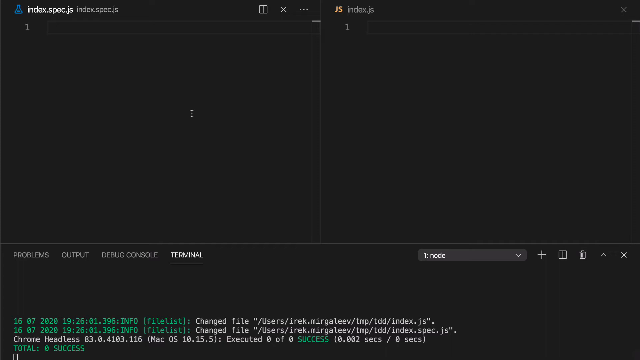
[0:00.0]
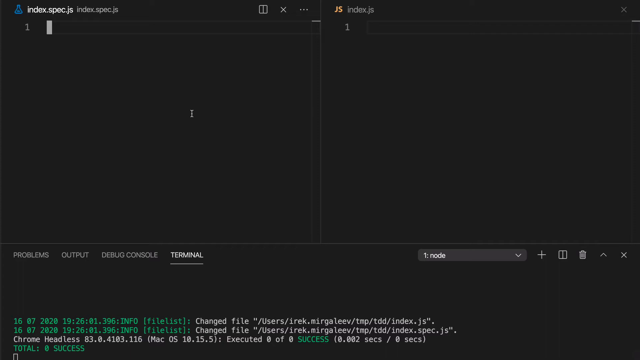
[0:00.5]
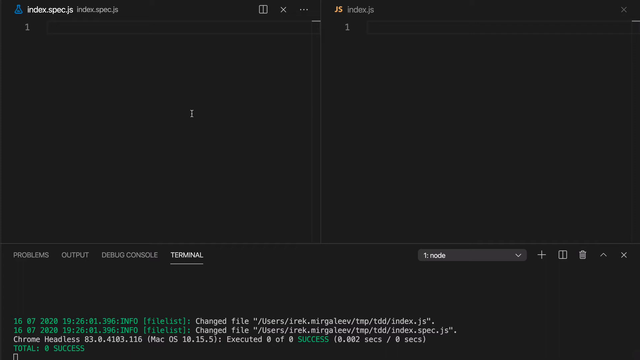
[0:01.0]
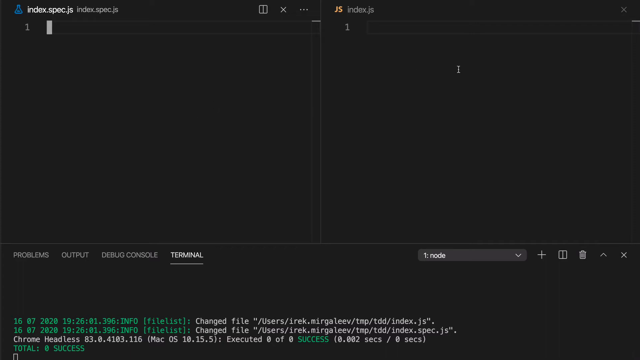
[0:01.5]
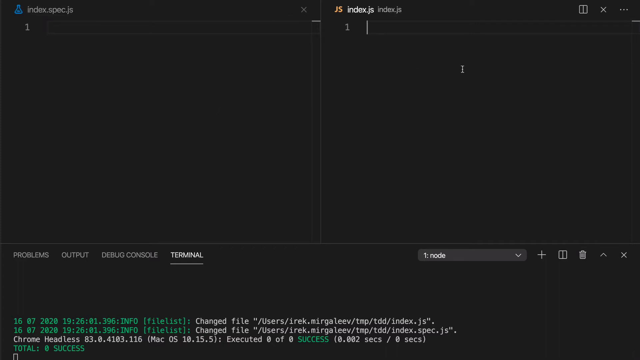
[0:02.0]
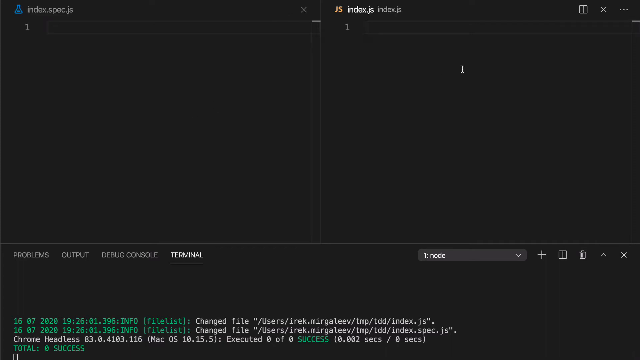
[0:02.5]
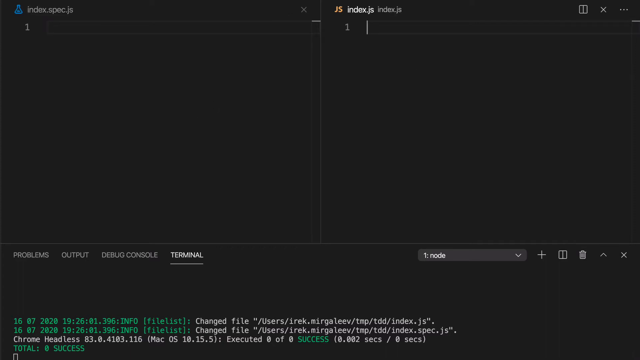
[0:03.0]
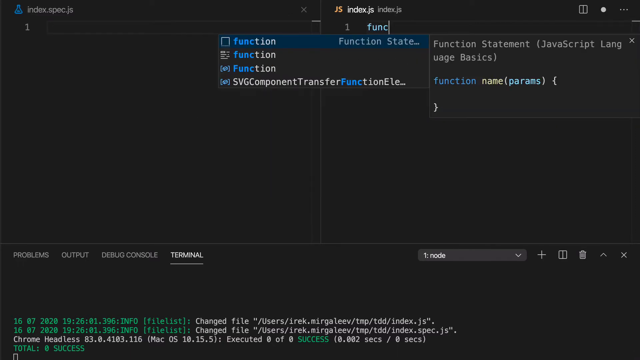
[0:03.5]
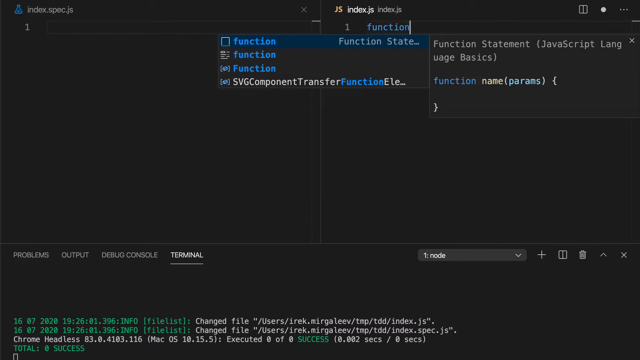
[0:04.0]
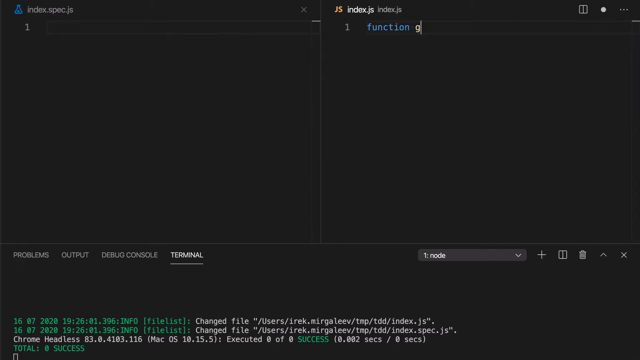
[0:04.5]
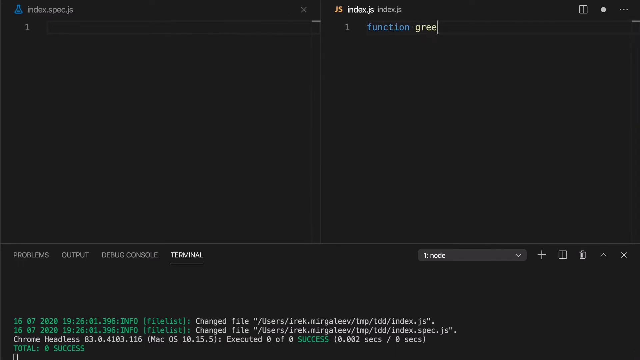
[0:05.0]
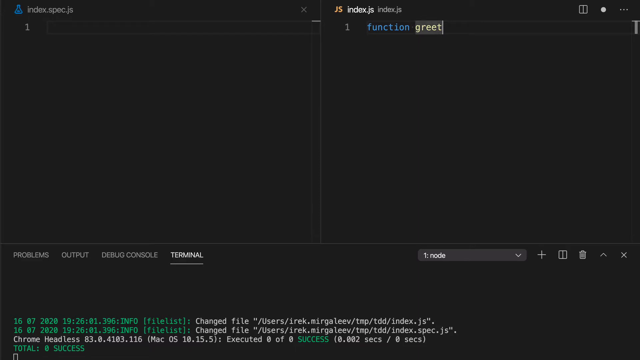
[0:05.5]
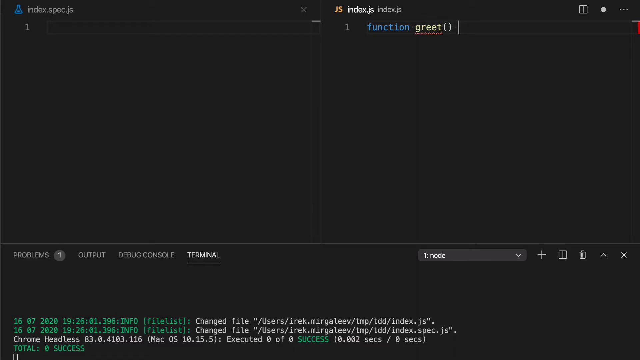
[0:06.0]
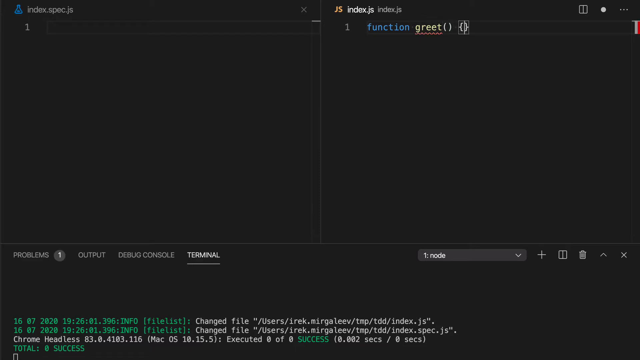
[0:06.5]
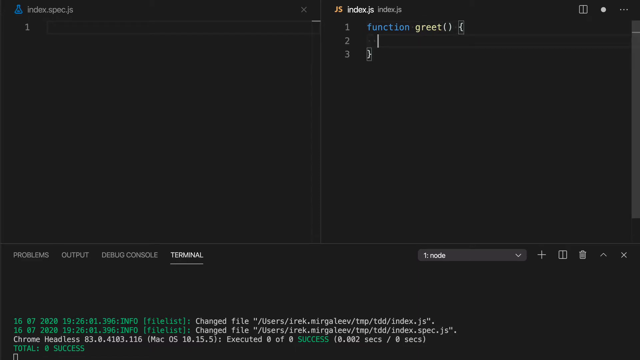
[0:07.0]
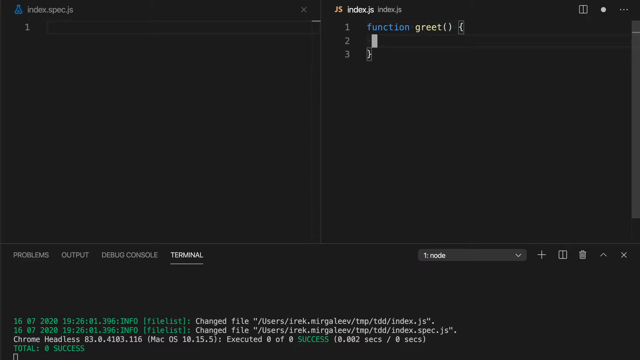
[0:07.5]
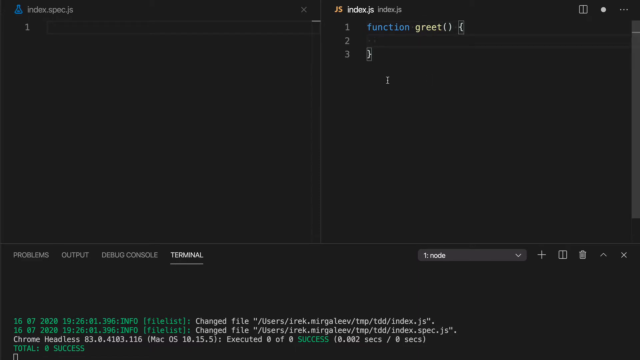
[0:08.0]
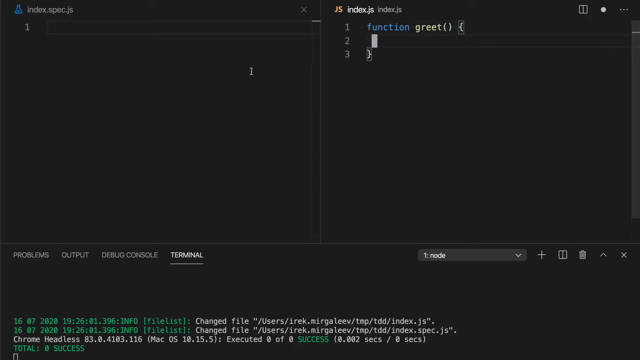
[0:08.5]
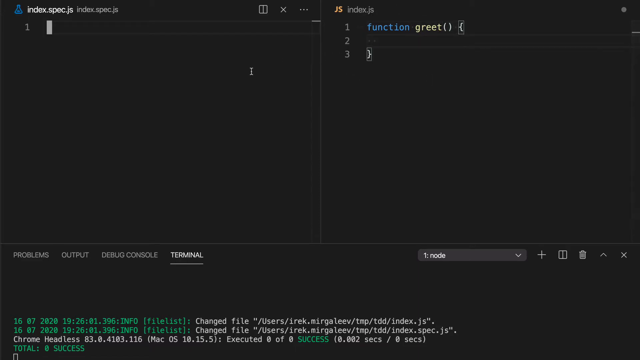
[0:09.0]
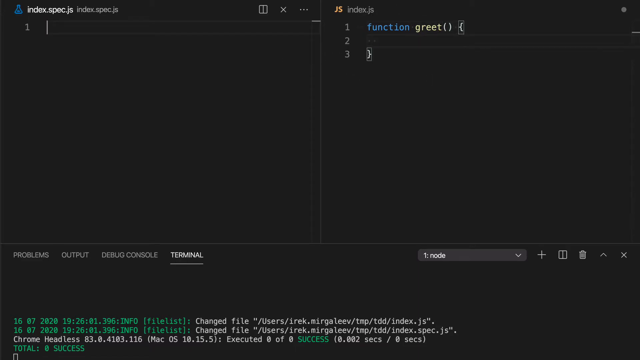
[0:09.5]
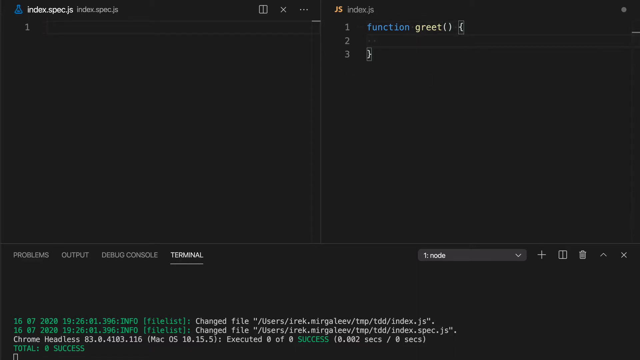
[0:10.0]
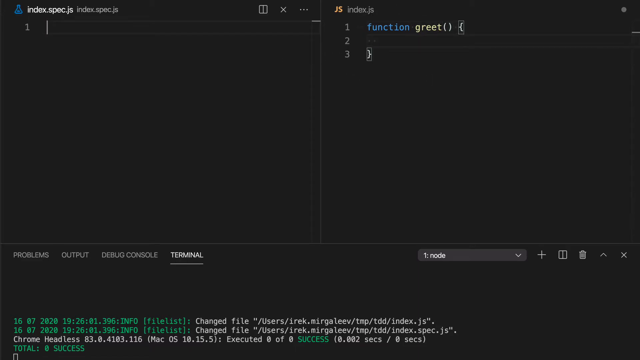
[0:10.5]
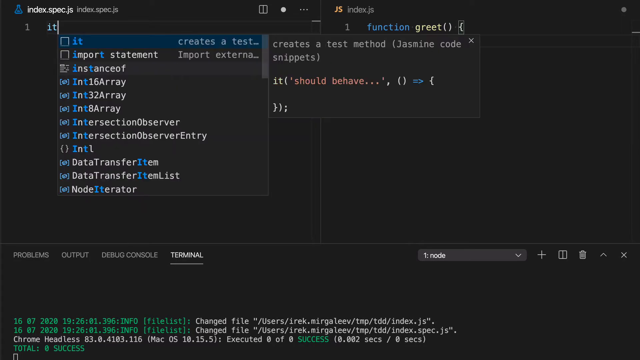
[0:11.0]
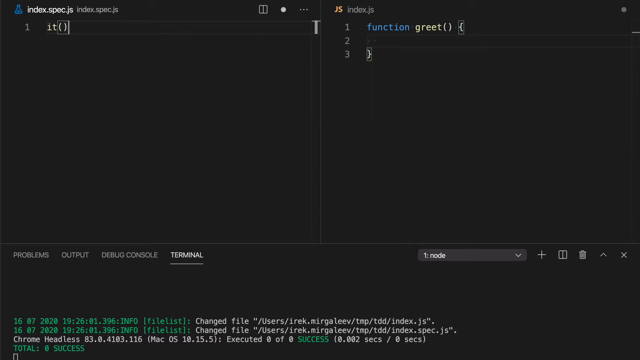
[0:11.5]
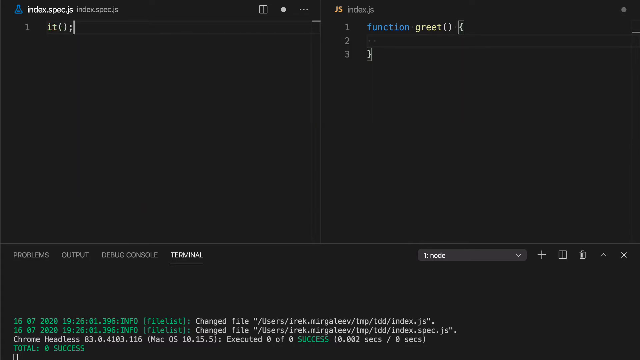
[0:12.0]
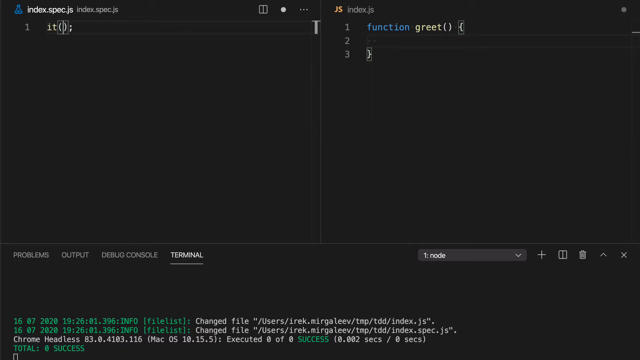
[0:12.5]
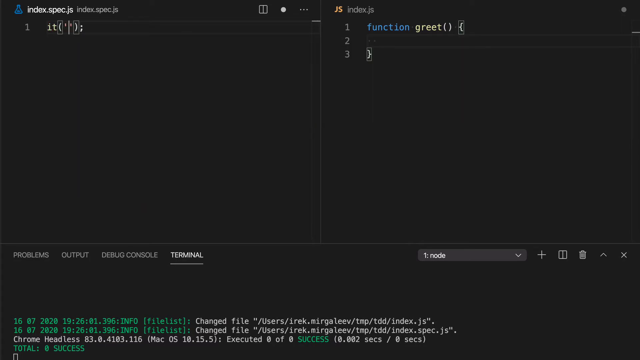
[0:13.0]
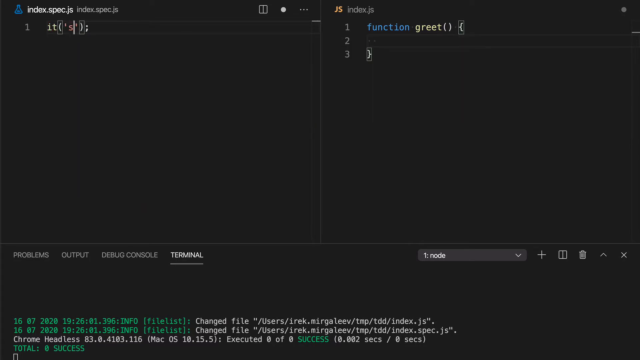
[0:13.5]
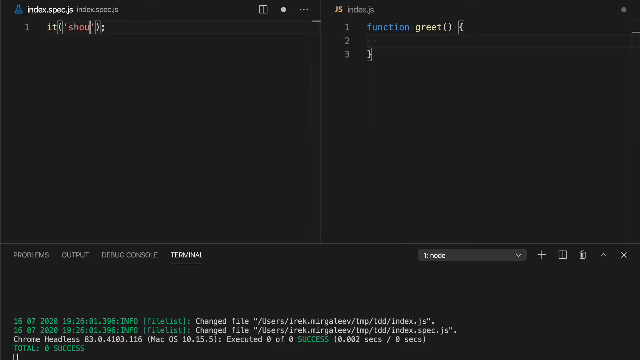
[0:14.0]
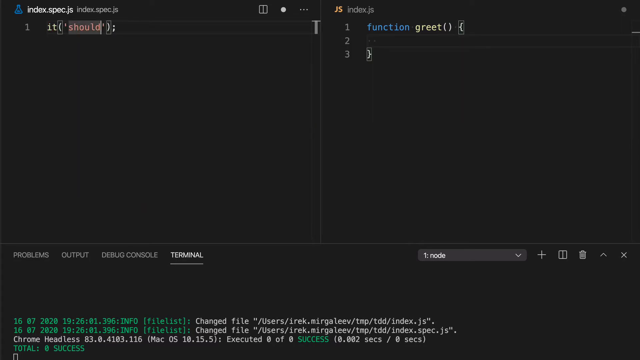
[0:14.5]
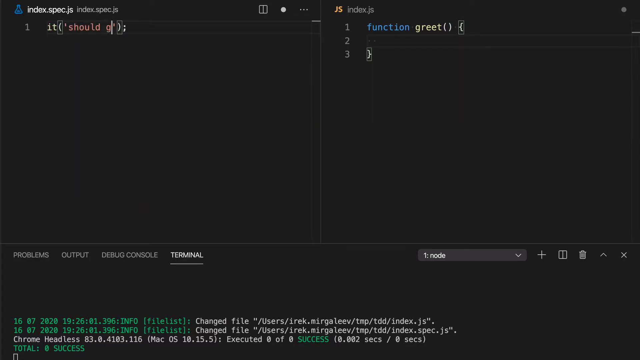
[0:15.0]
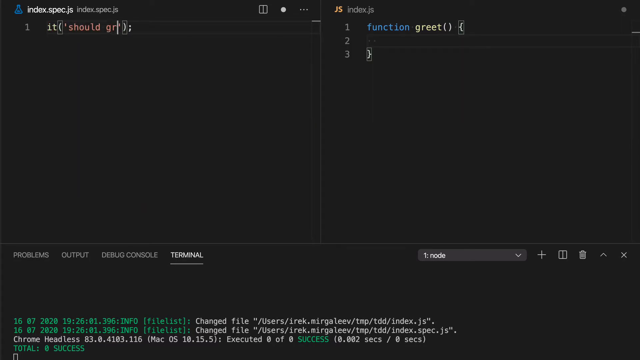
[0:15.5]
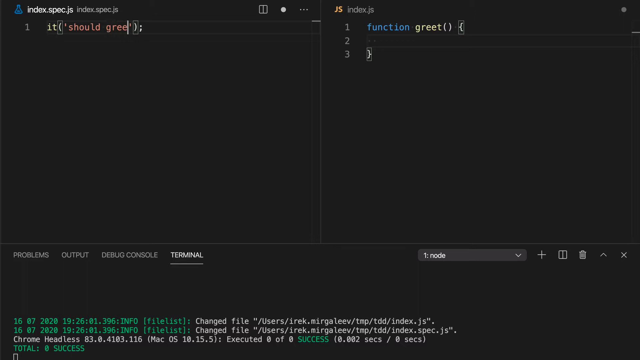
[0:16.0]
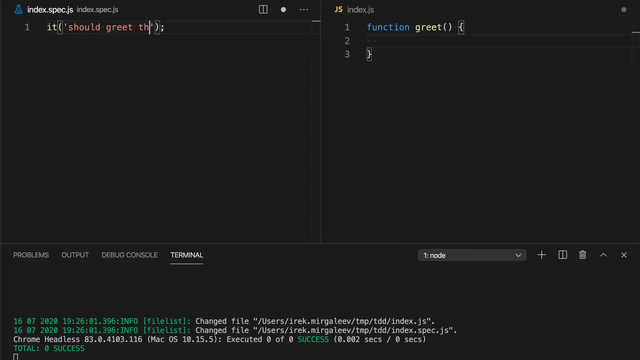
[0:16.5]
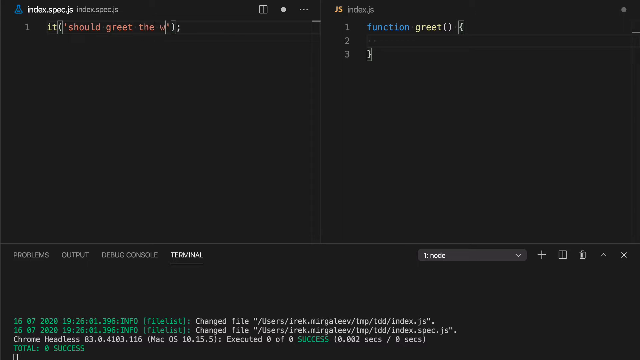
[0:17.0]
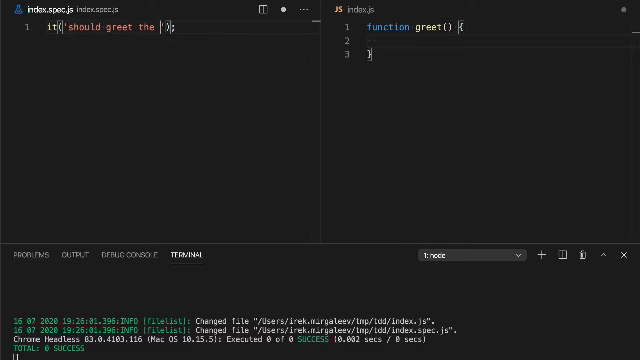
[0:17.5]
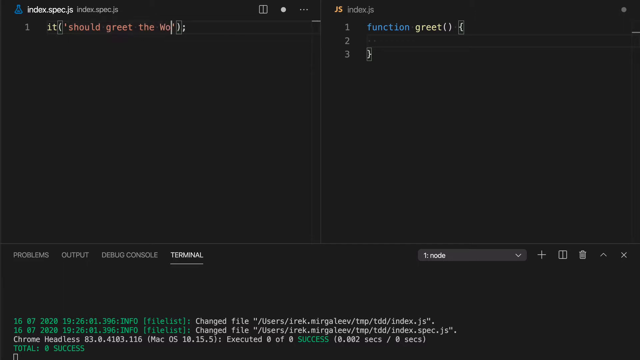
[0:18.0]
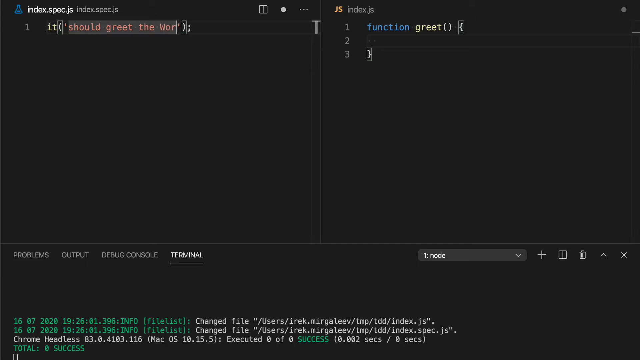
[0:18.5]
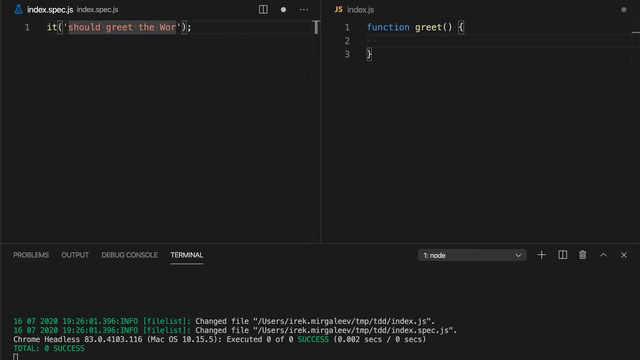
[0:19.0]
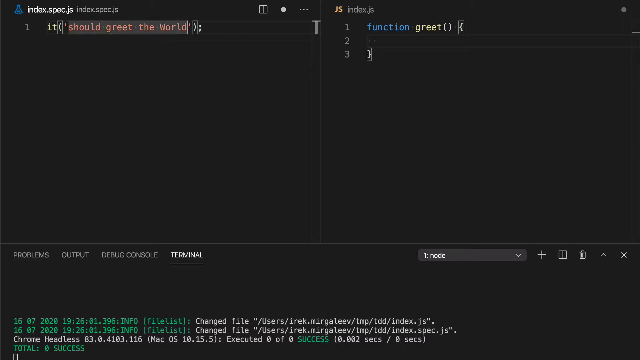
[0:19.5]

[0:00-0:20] A computer programming screen appears, showing labels such as "JavaScript", "index specs", "function", "terminal" (which is underlined), "debug console", "output", "problems" and "mode". Much of the screen is blank, but small words such as "function" and "greet" pop up as someone types program code, including "should greet the world". The typing then stops.